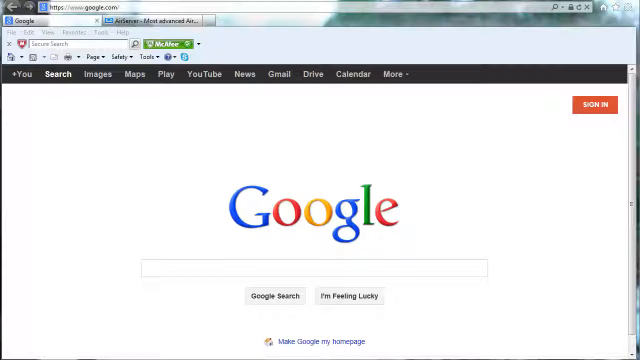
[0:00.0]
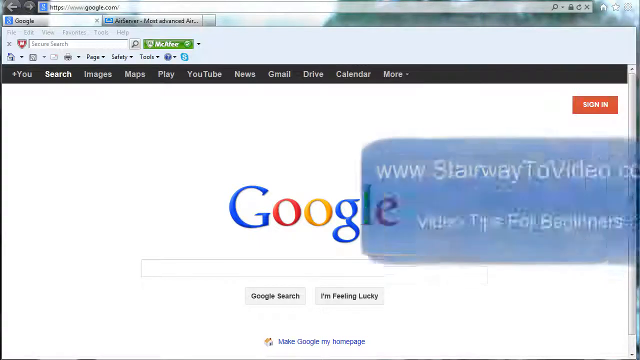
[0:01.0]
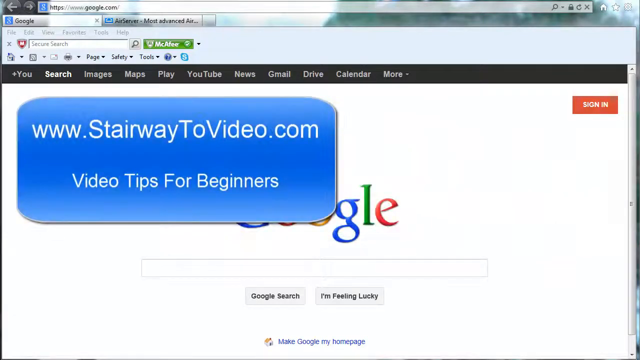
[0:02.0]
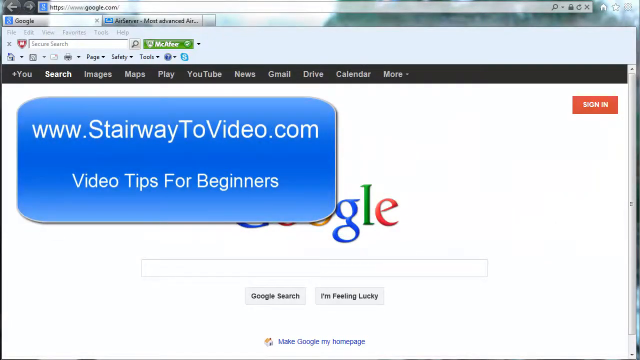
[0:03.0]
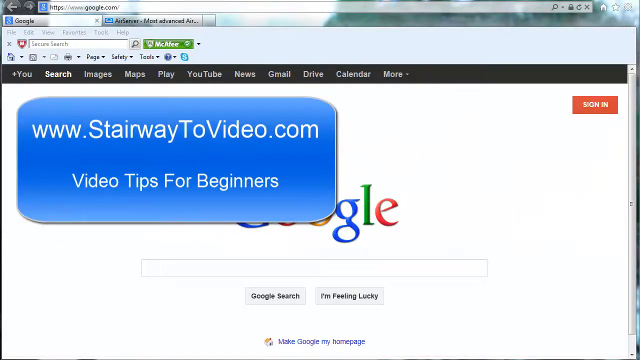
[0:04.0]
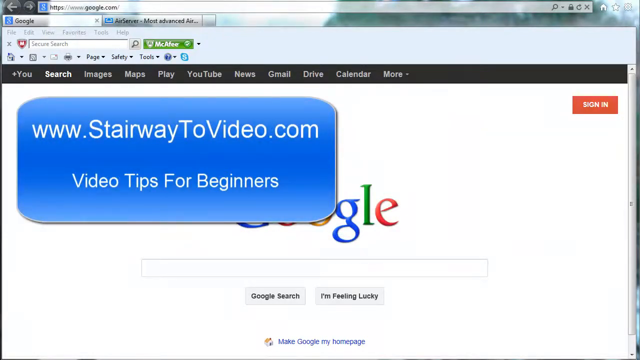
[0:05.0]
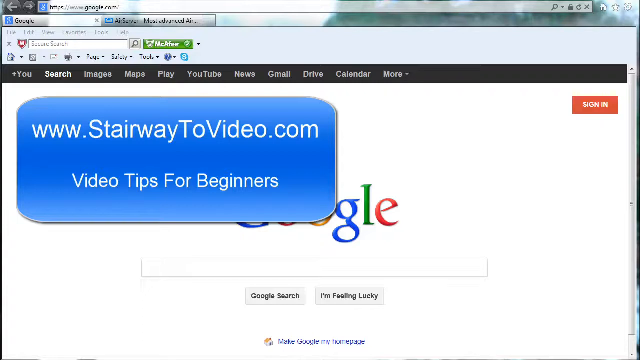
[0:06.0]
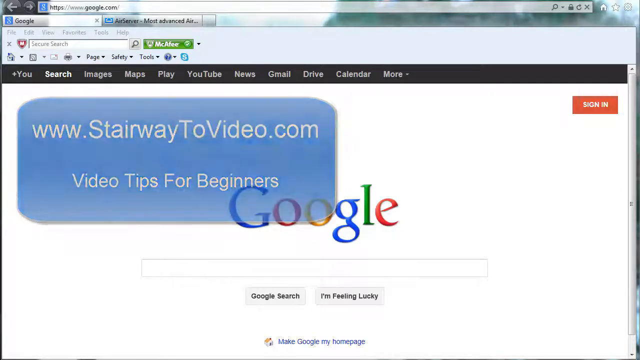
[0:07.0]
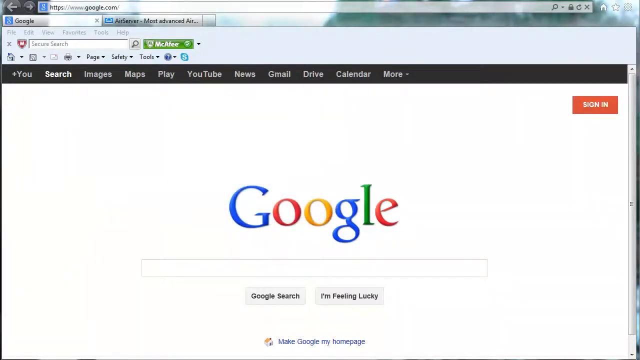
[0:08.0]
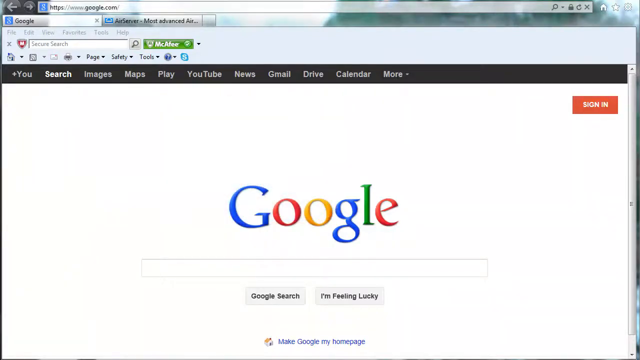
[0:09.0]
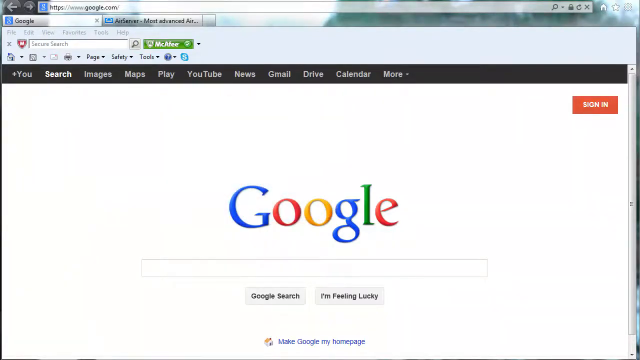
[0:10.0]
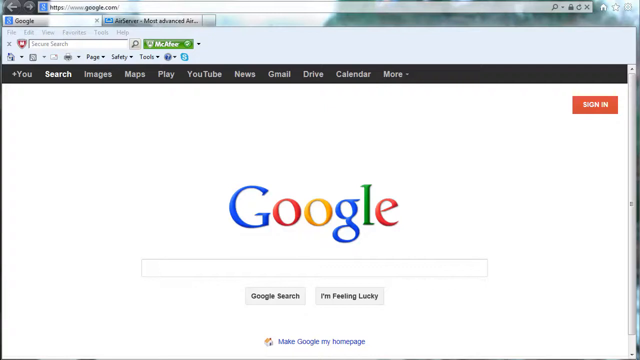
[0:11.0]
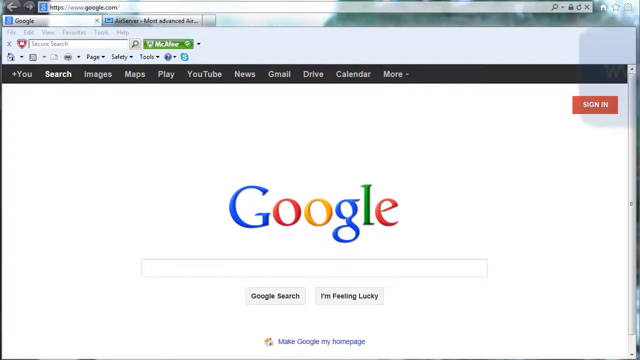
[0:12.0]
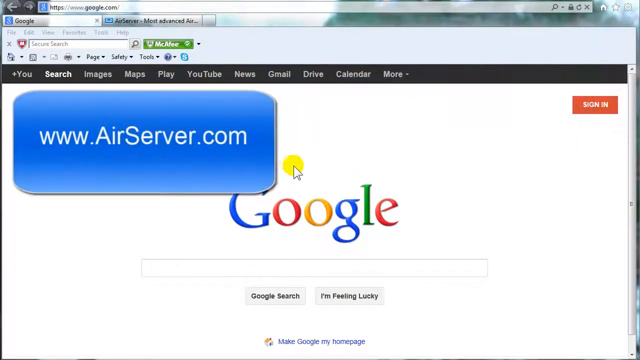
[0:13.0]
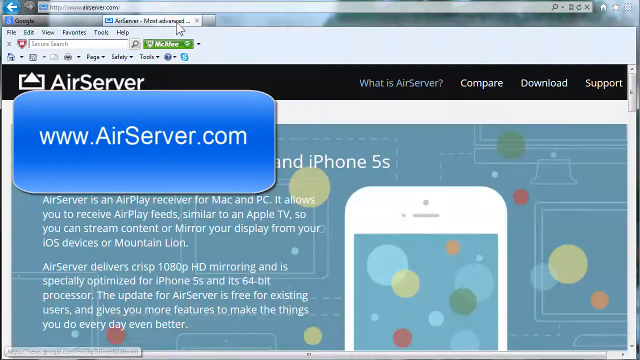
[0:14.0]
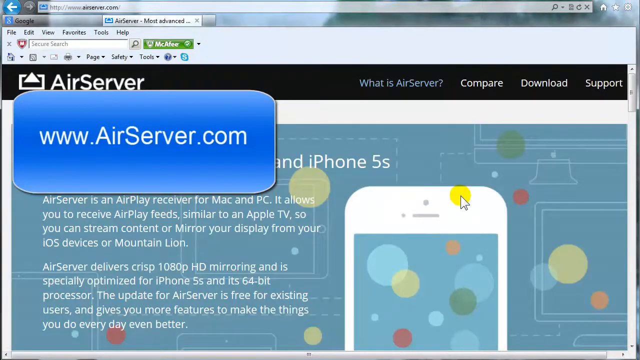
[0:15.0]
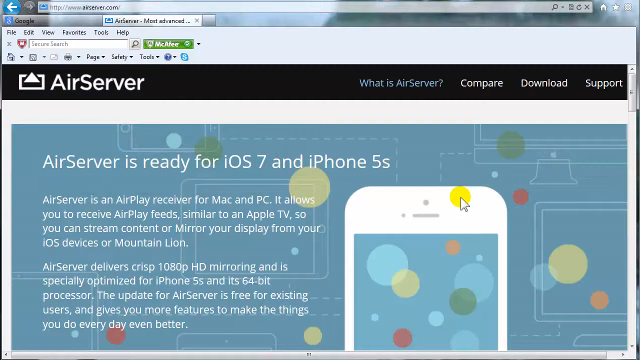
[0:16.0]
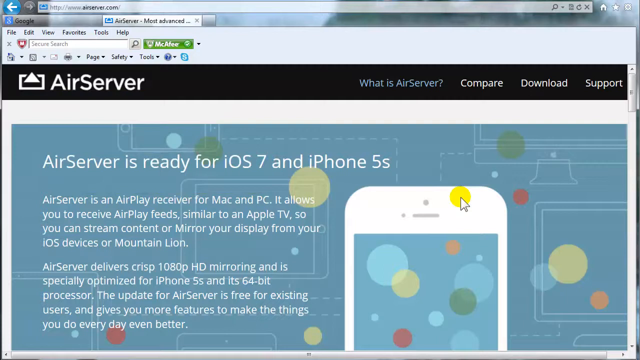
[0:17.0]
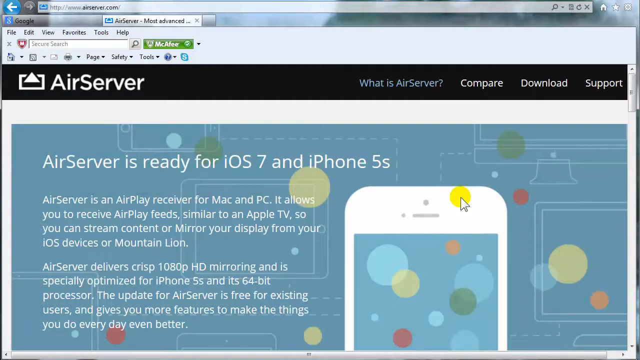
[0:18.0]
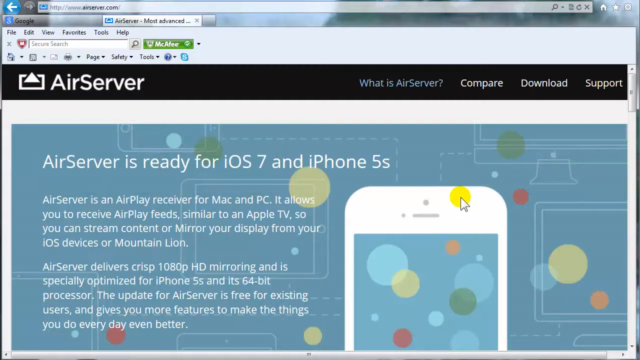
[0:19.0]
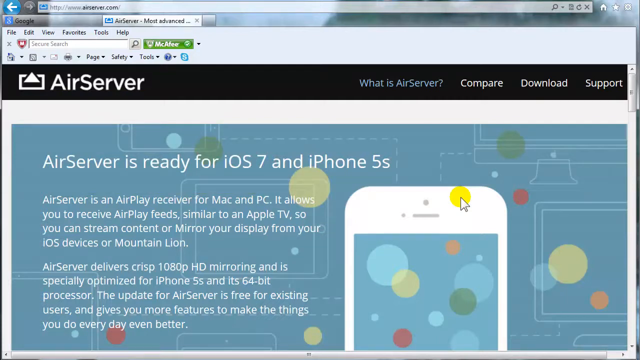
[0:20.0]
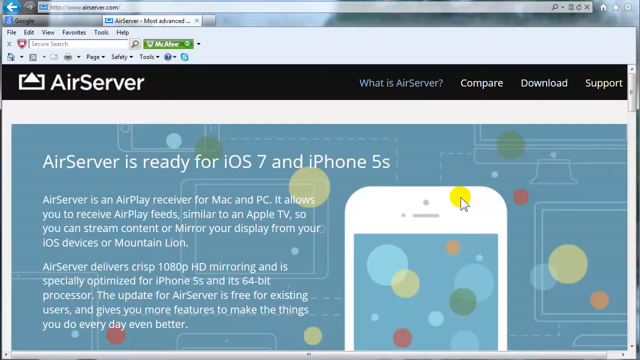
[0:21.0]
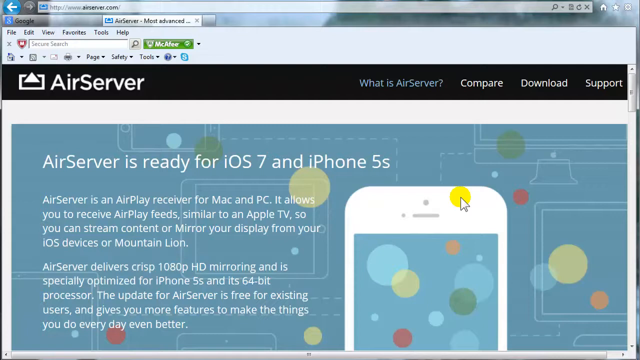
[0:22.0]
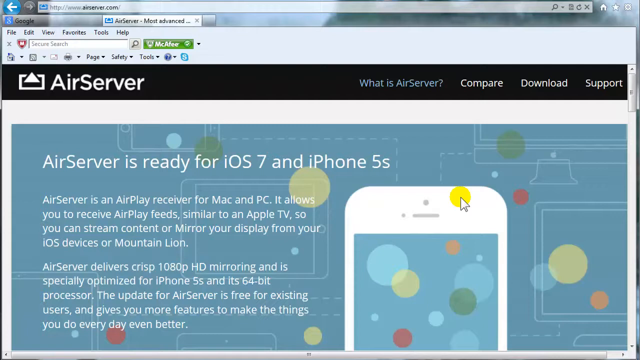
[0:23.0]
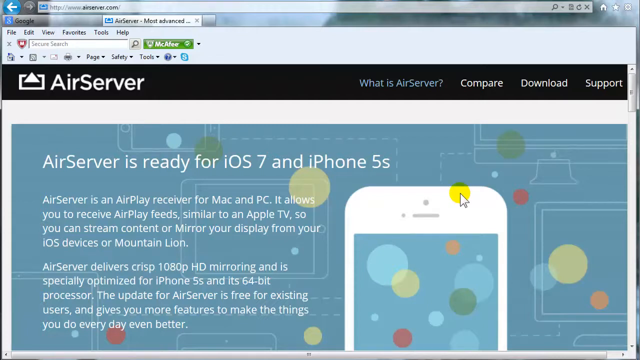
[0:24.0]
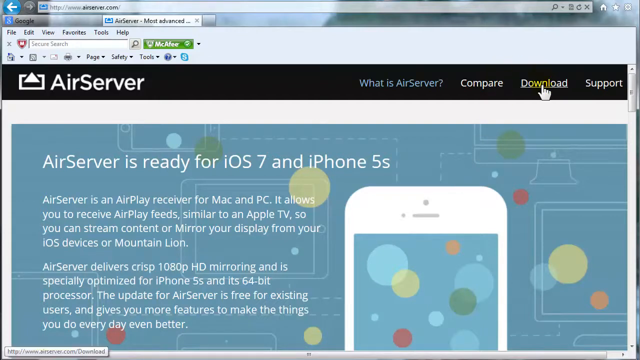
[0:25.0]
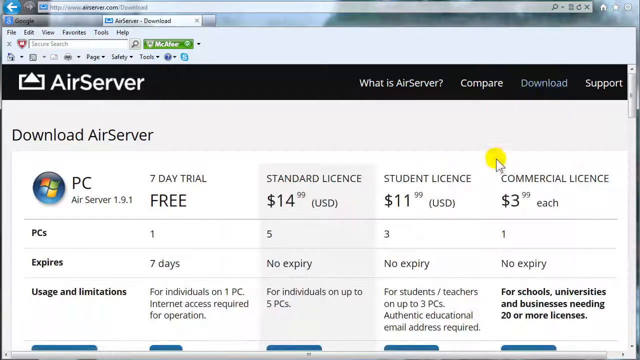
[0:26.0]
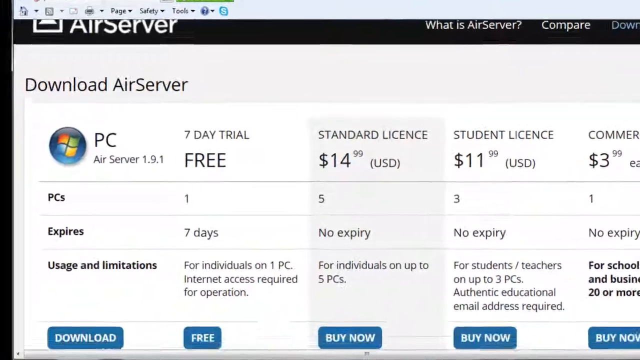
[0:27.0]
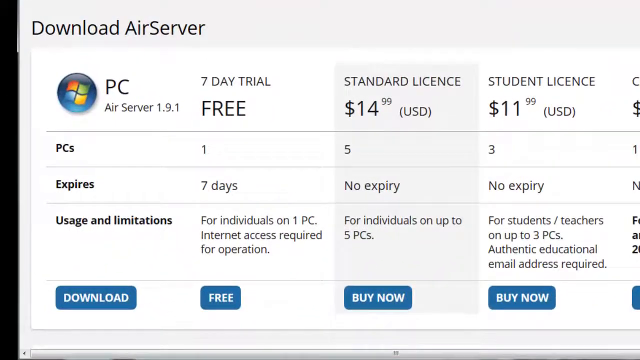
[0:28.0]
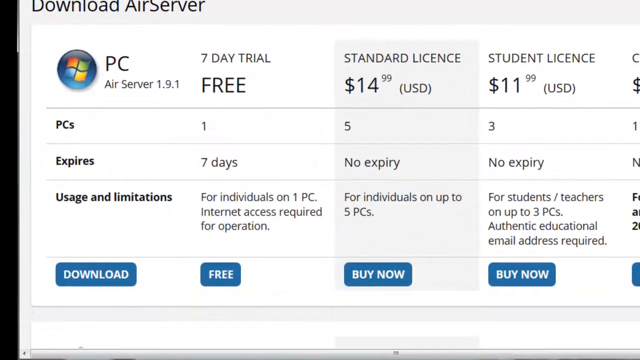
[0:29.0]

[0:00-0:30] A Google search page is on a screen, with the search bar visible. A blue box moves in from the right side of the screen all the way to the left, carrying white text with a web address and, underneath, "video tips for beginners." It fades away, leaving the Google search bar visible. Another blue box flies in with another web address, "www.airserver.com," and the page in the background changes from Google to what appears to be the AirServer website. A title in white text reads "AirServer is ready for iOS 7 and the iPhone 5s," with an article in white text underneath it. On the right side there is an image of a white sofa, and the page has a blue background.